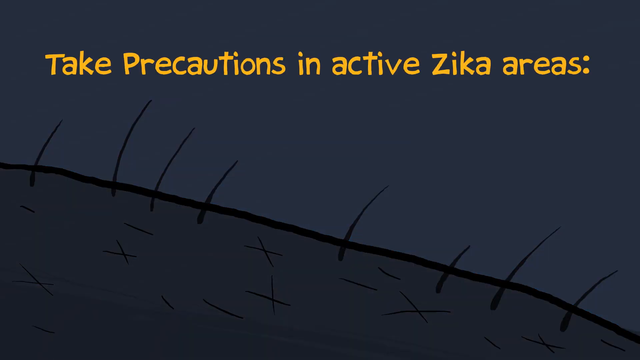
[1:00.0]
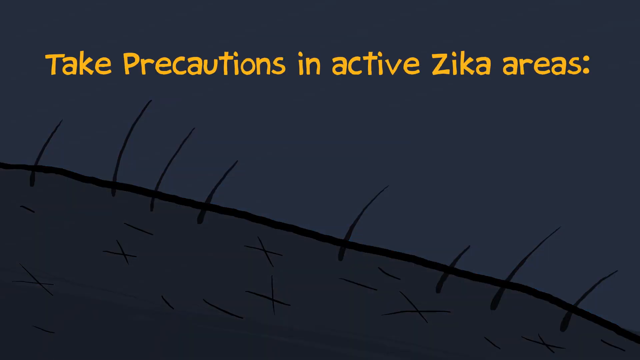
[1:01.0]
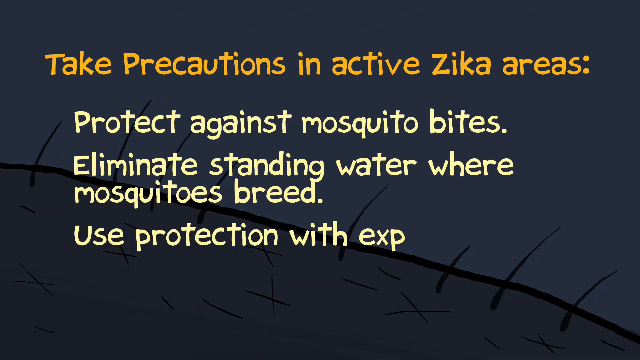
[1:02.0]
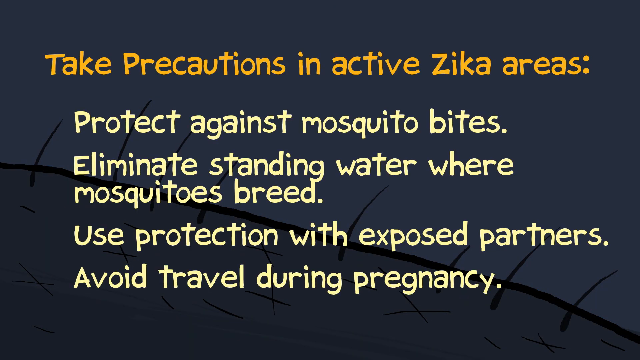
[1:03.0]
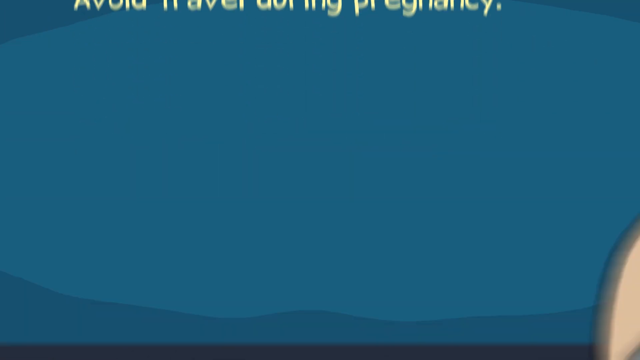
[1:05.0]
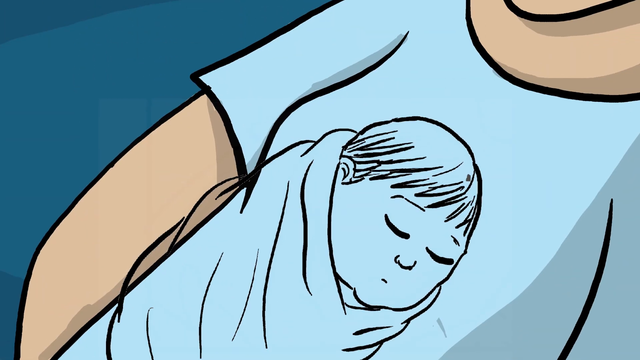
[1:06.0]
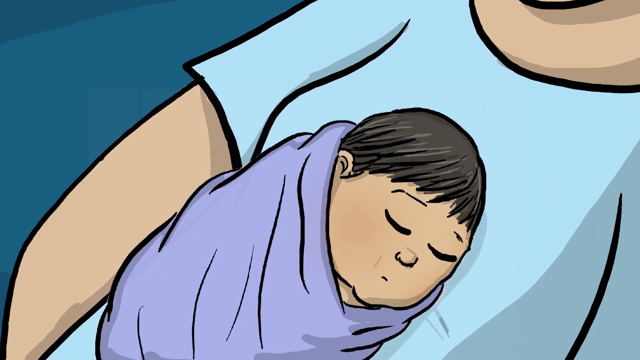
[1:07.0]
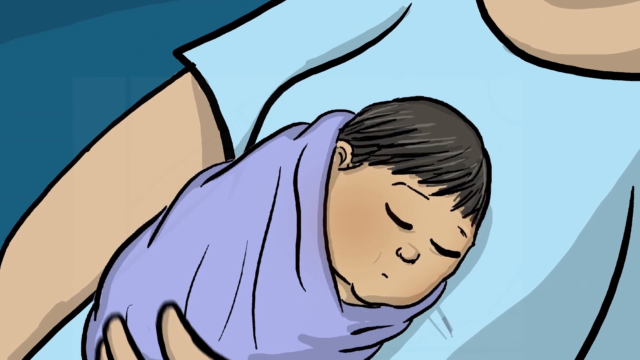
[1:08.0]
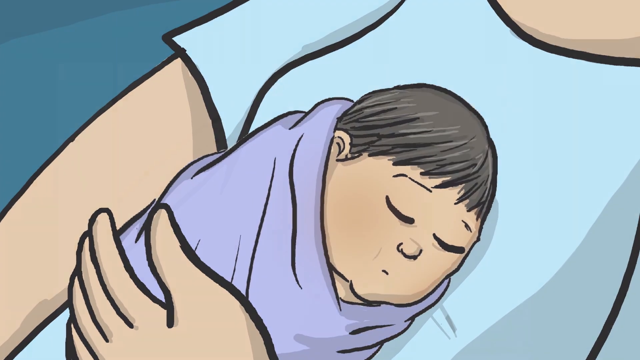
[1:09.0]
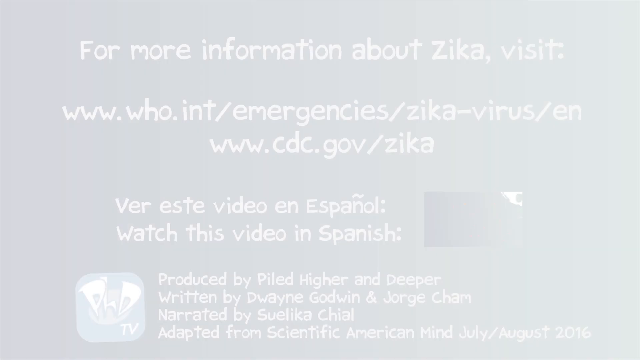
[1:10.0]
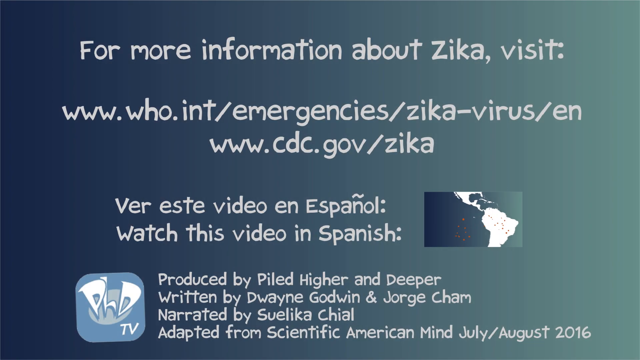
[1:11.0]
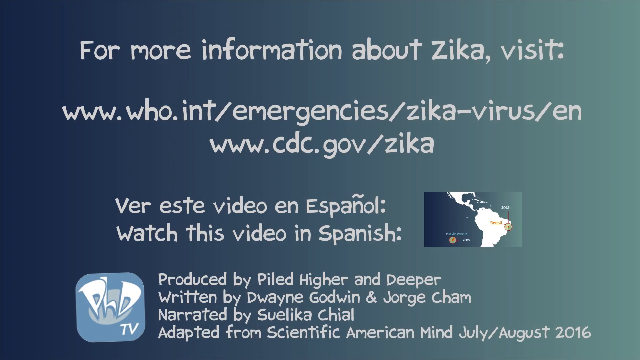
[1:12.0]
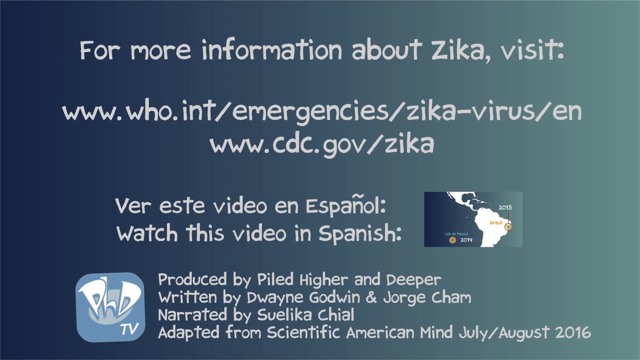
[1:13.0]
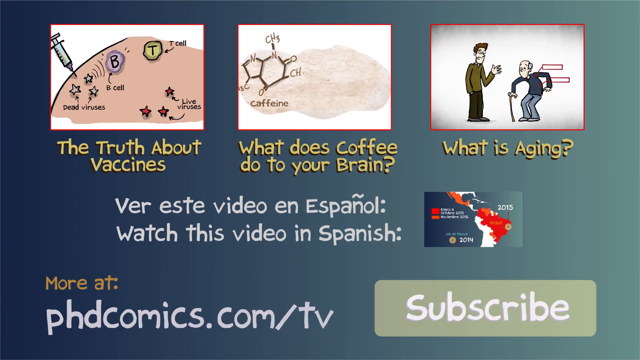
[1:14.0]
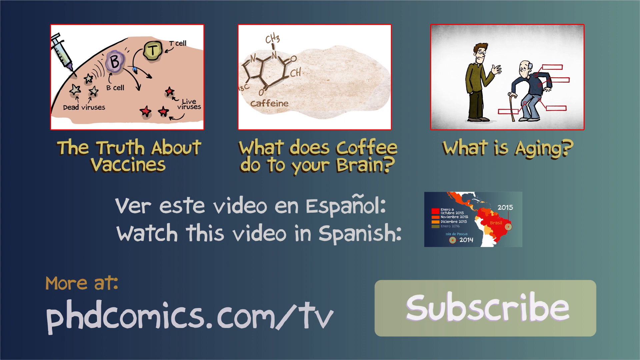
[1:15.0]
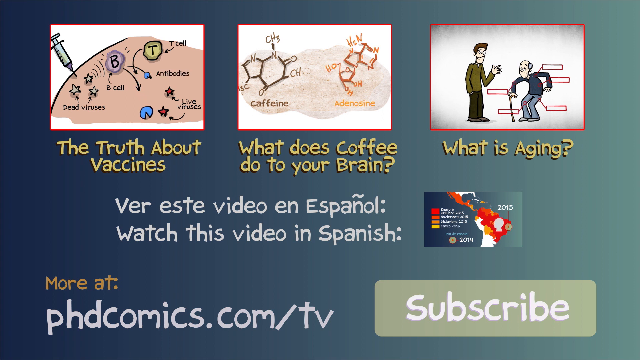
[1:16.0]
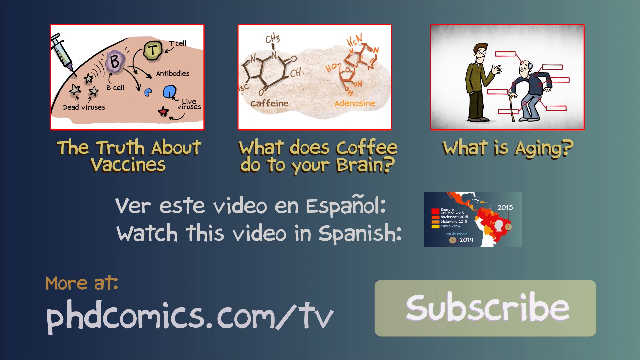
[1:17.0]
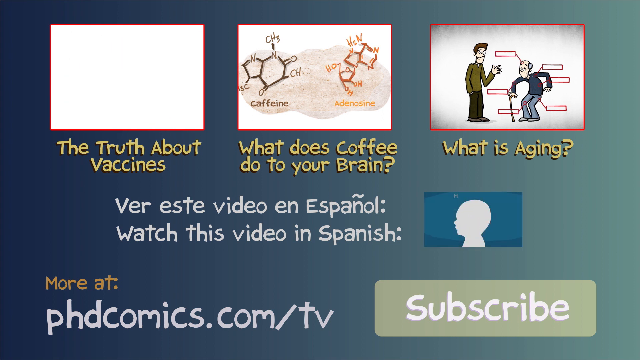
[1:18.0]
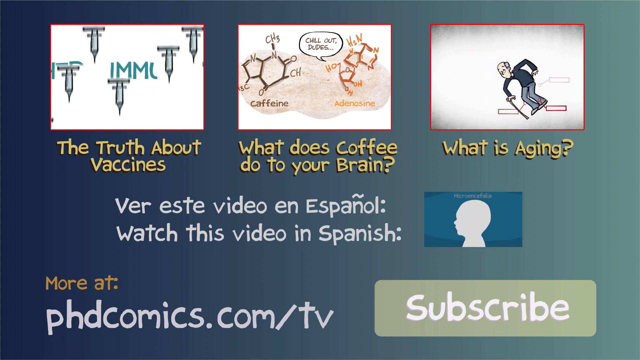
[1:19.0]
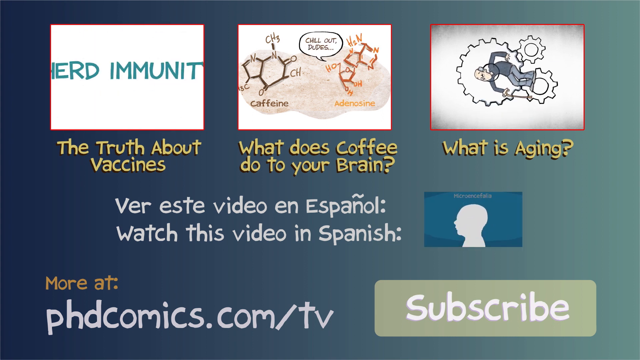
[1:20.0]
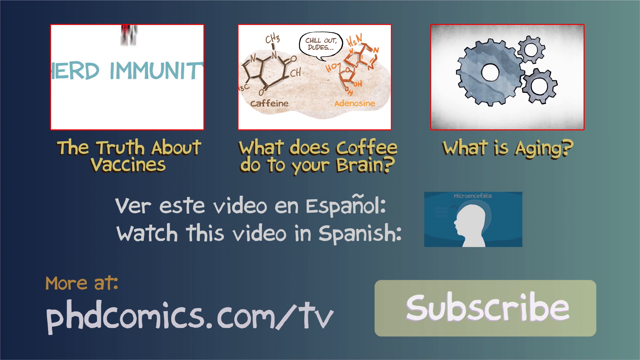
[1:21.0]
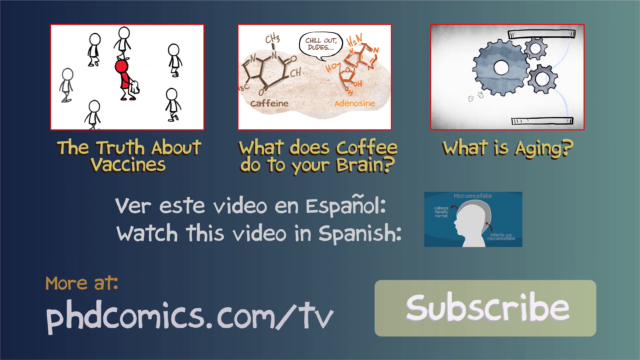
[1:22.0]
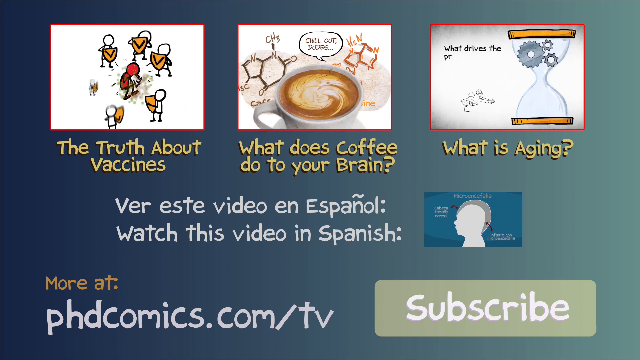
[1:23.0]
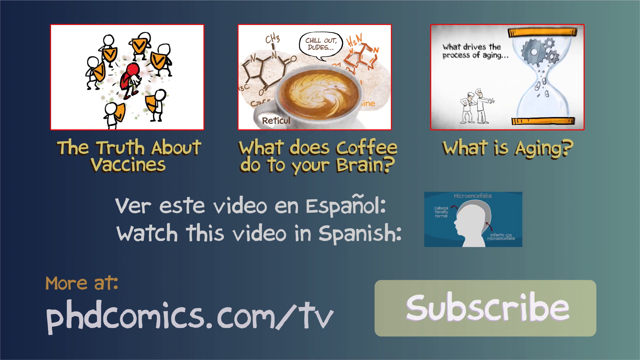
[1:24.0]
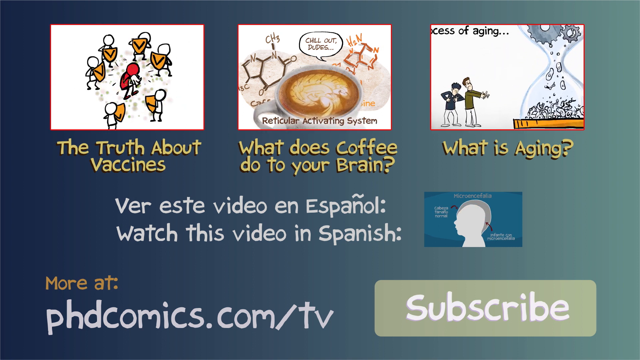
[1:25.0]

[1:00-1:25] The image of the arm fades to a dark grey, and yellow text appears at the top of the screen: "Take precautions in active Zika areas". Lighter yellow text appears below in individual lines: "protect against mosquito bites", "eliminate standing water where mosquitoes breed", "use protection with exposed partners" and "avoid travel during pregnancy". The text disappears up to the top of the screen while the darker background wash is removed off the bottom. A cartoon-style figure is brought in from the right, showing the bottom of a chin, a chest and a right arm, with cream flesh and a white t-shirt, and a baby in light pink swaddling, facing down to the bottom of the screen, is drawn in lying on top of the chest. A left hand appears from the bottom of the screen to hold the baby. The scene fades to white and back out to a background that is blue on the left, becoming lighter green on the right. White text reads "For more information about Zika visit www.who.int/emergencies/zika-virus", with "www.cdc.gov/zika" underneath. Below this is "ver este video en español" and below that "watch this video in Spanish". To the right, a rectangle shows an excerpt from earlier in the video with the map of South America. Below this is the text "produced by Piled Higher and Deeper, written by Dwayne Godwin and Jorge Cham, narrated by Suelika Chial, adapted from Scientific American Mind July/August 2016", with the PhD TV logo from the start to its left. Three boxes are brought in from the right at the top, replacing the web address directions; they appear to be small videos linking to other videos. The left box is captioned underneath "the truth about vaccines", the middle one "what does coffee do to your brain" and the right one "what is ageing". Meanwhile, the credits are replaced by text swiped in from the right: "more at phdcomics.com/TV", along with a light green rectangle with "subscribe" written on it in white.